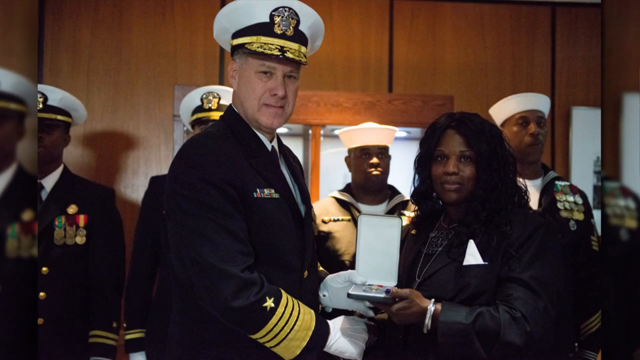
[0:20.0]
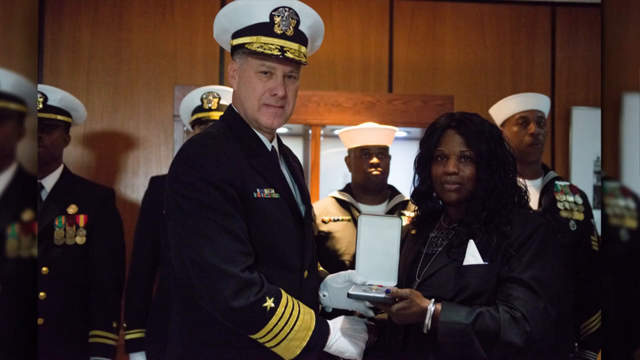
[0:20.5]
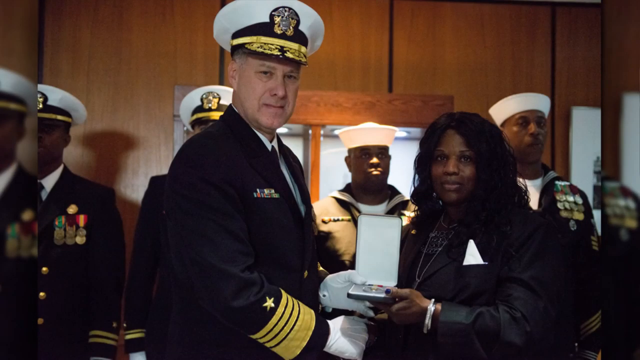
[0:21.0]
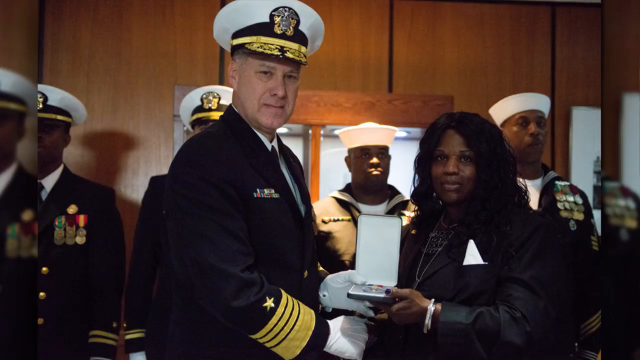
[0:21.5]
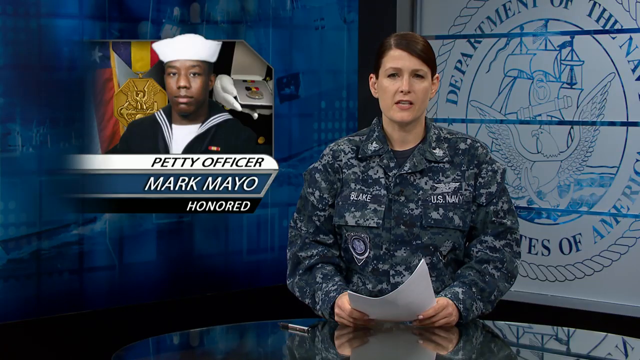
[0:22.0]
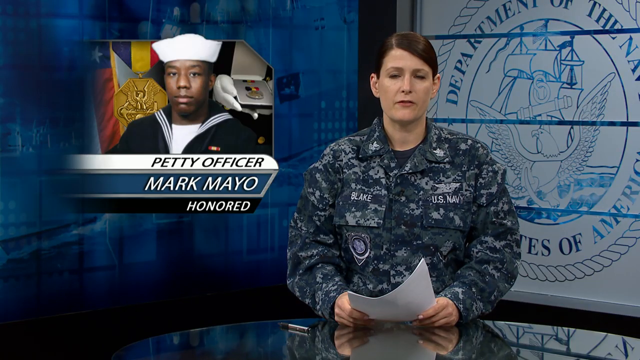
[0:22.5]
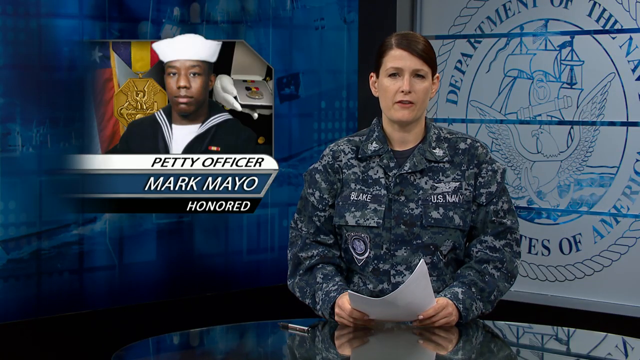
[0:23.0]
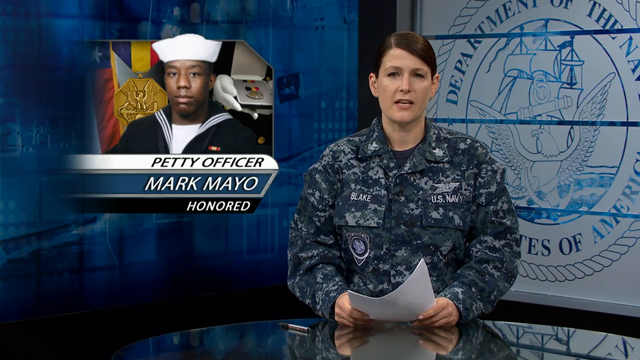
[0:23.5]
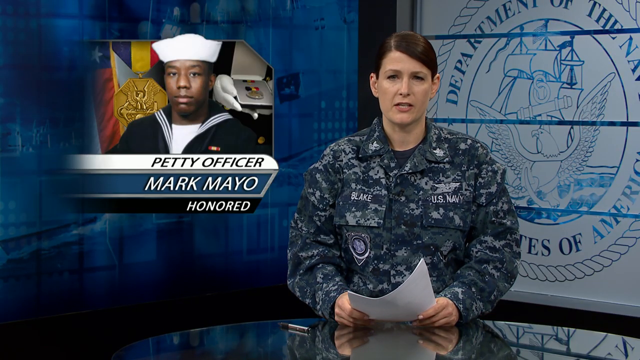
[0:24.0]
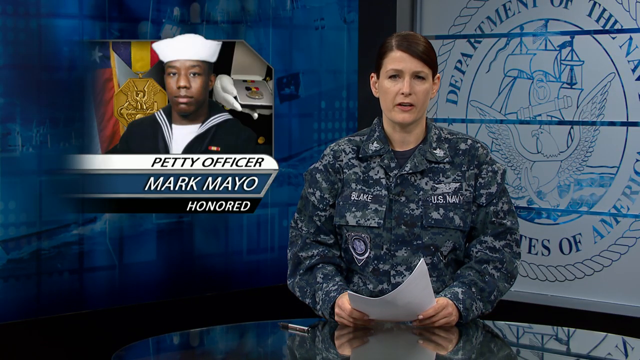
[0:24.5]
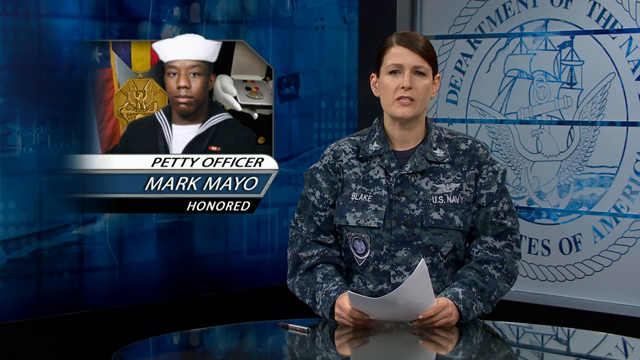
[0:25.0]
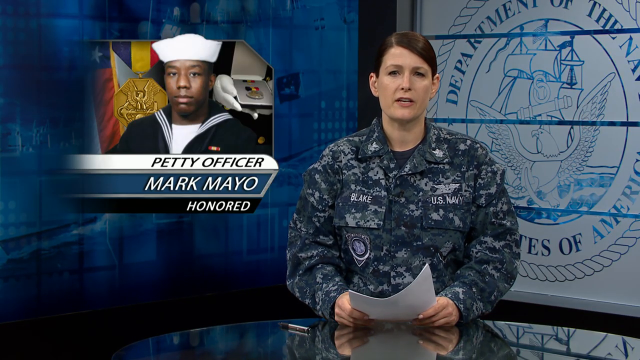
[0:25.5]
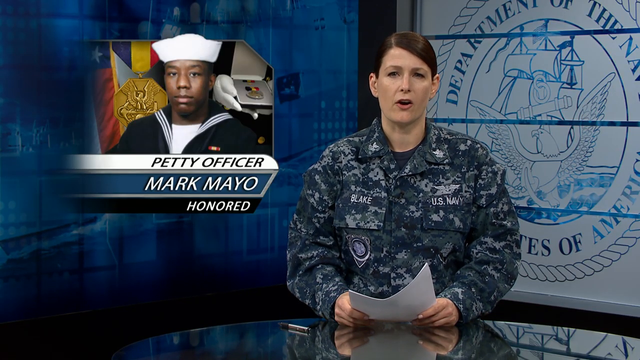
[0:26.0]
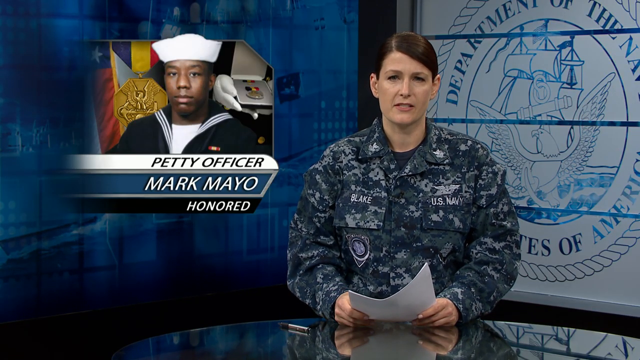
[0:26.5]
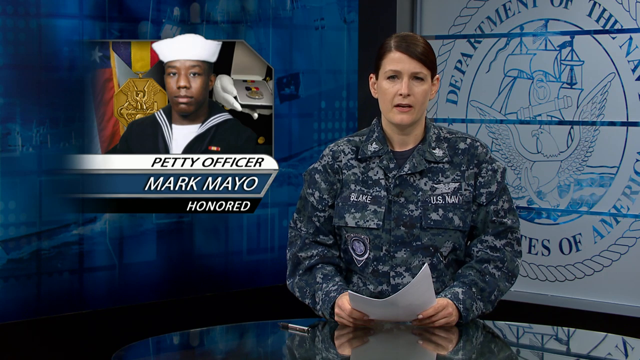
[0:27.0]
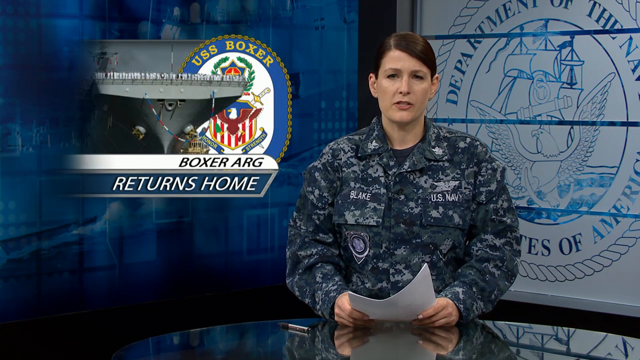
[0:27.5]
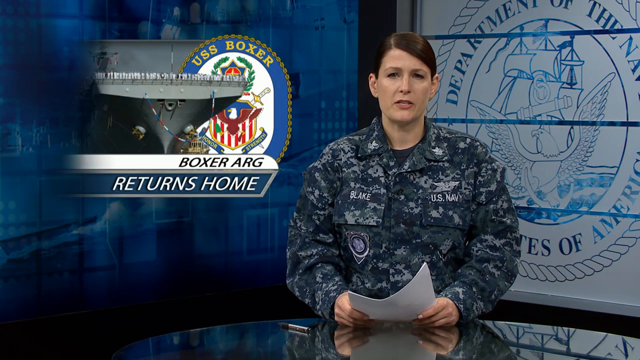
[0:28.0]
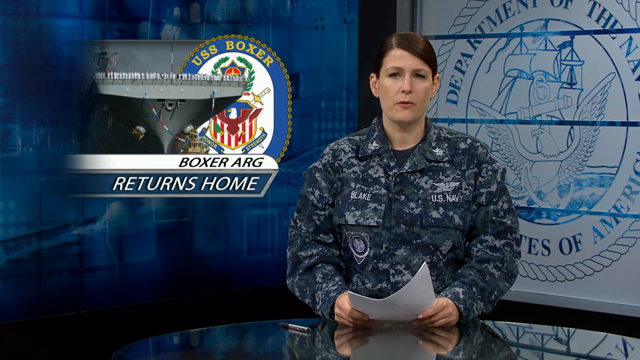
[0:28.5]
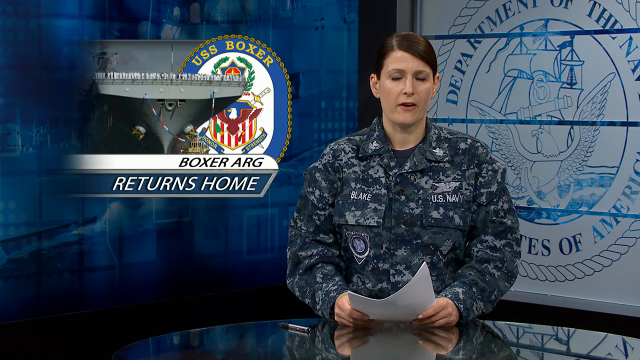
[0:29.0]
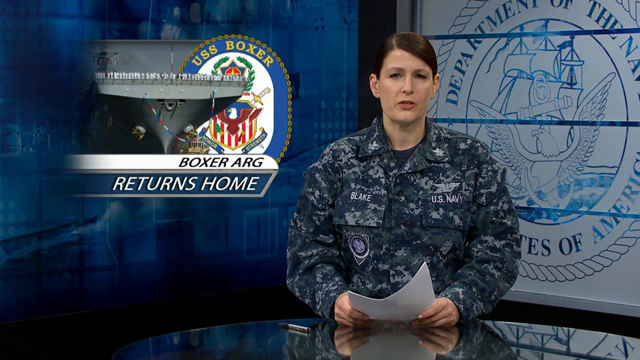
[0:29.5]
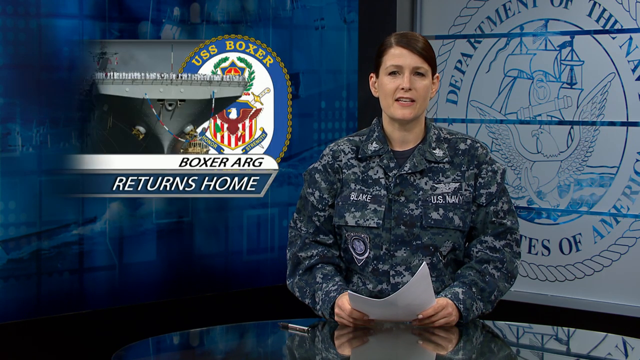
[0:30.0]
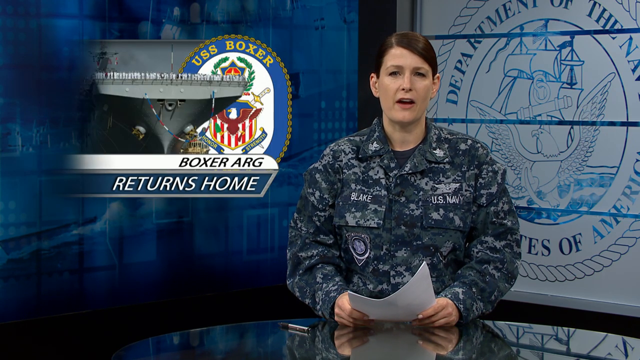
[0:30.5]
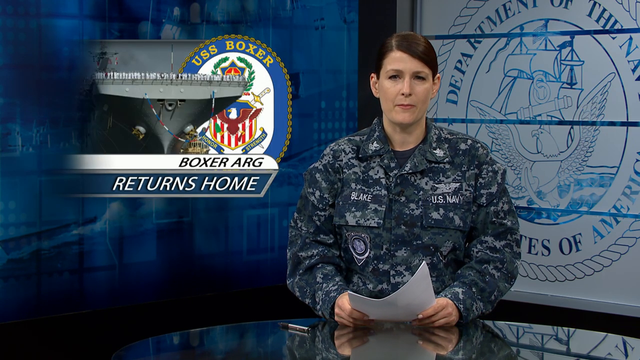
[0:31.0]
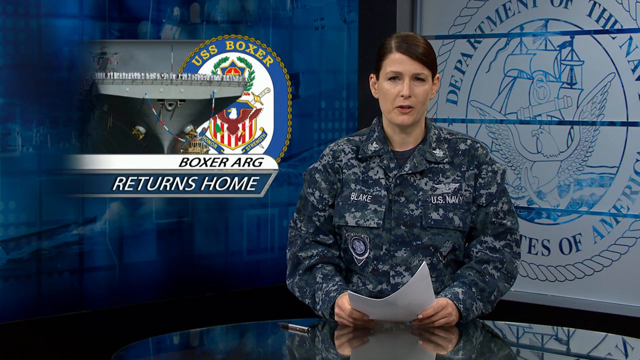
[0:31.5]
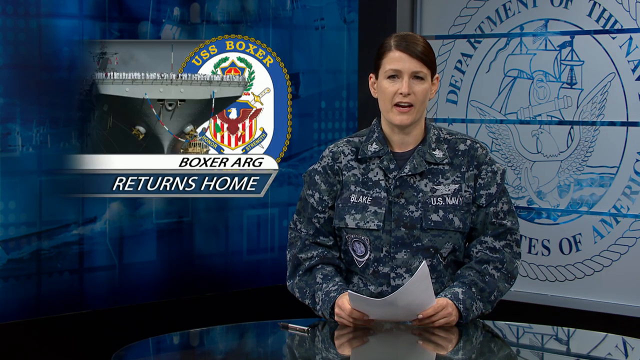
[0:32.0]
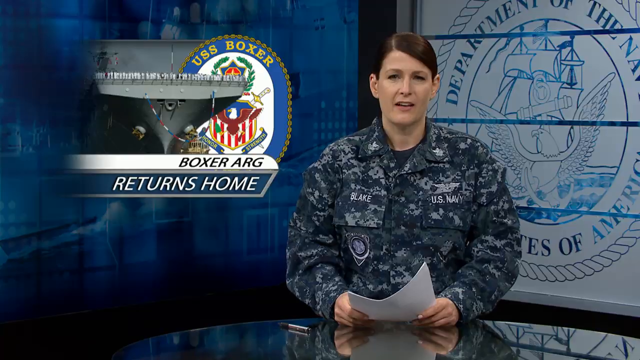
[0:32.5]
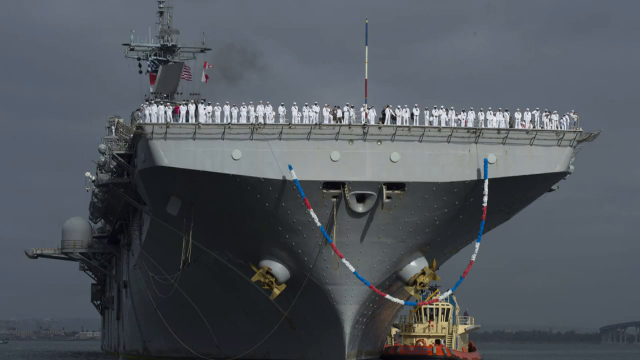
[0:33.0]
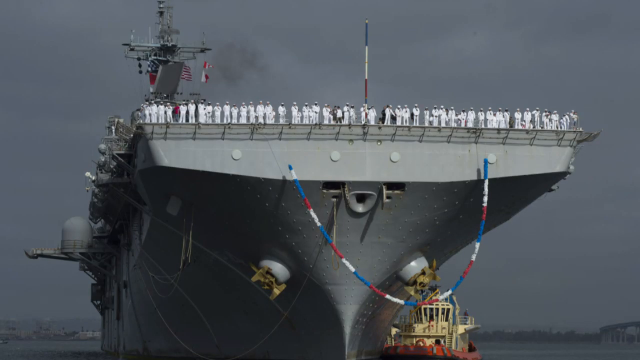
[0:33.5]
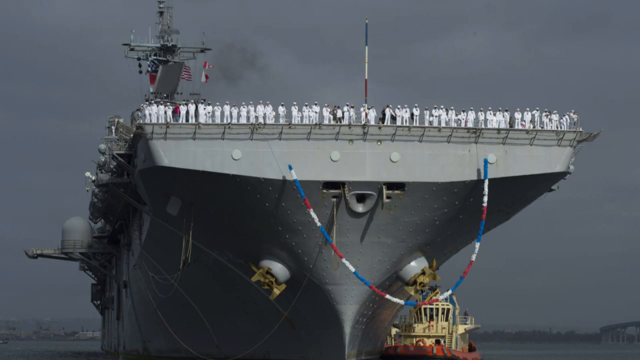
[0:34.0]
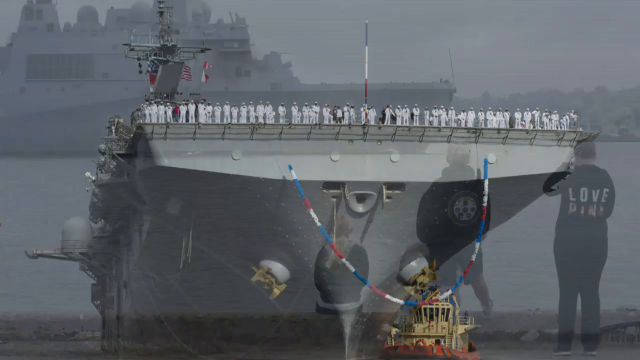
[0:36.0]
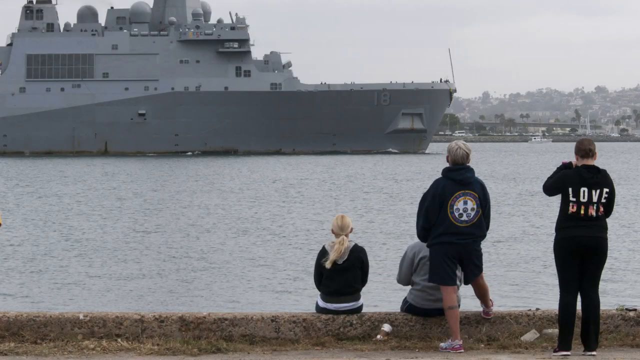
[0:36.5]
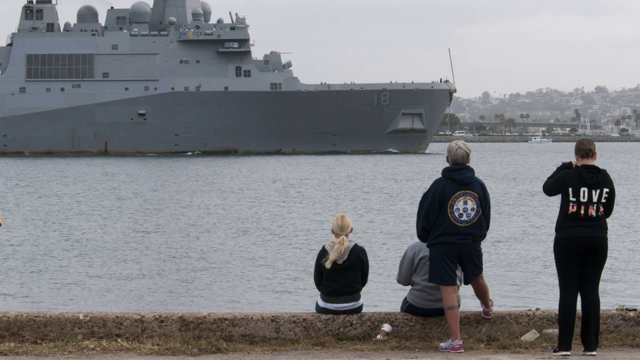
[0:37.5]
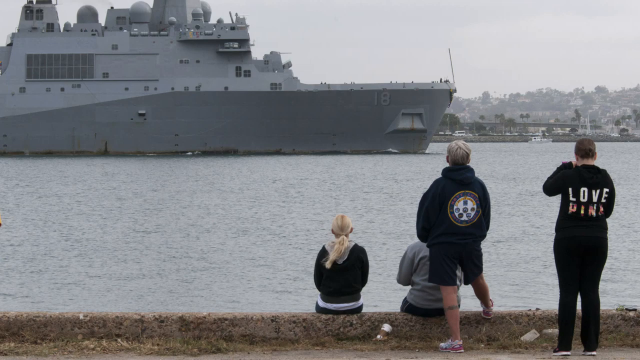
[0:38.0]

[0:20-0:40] Women are standing with Marines while people watch them. A young man is shown who was honored as a Marine. A woman in a U.S. Navy uniform appears with a blue background behind her, and the graphics refer to the USS Boxer. An image shows people meeting: two people are sitting and two are standing, looking out. A big ship appears. A woman in a U.S. Navy uniform has the name Blake. A banner on the screen says "Boxer AG returns home" next to the USS Boxer logo. "Welcome home" is written on something. A big naval ship appears, with sailors sitting in the ship wearing white uniforms, white shirts and white hats; they apparently come from the Marines. In the last picture, a white man and a woman holding something she was presented with, including a hat. Three naval ships are at a sea harbour. Several huge circles are visible.